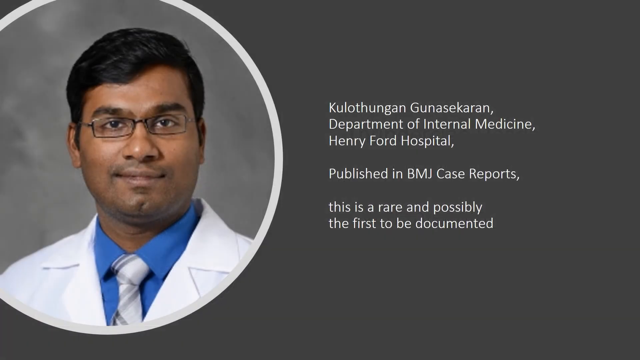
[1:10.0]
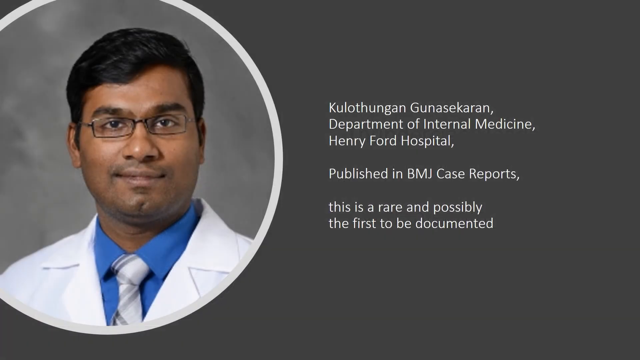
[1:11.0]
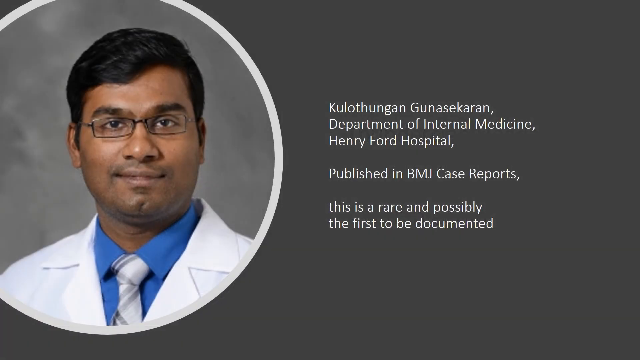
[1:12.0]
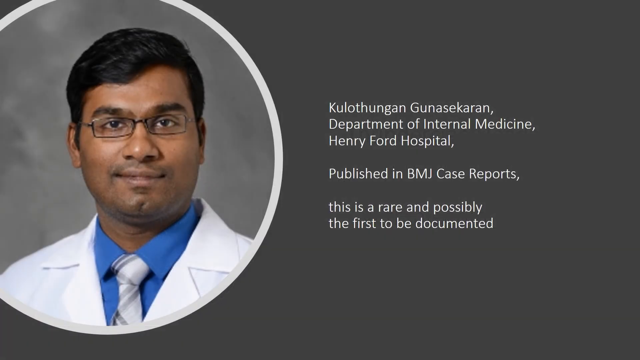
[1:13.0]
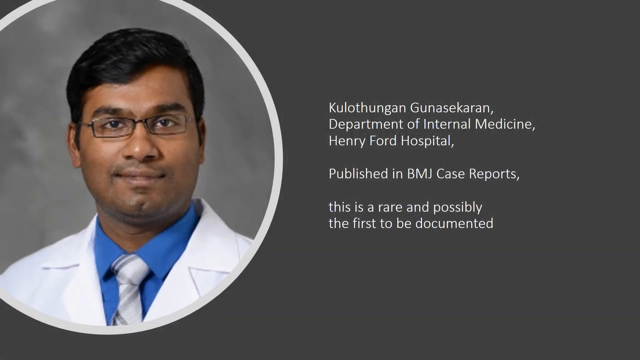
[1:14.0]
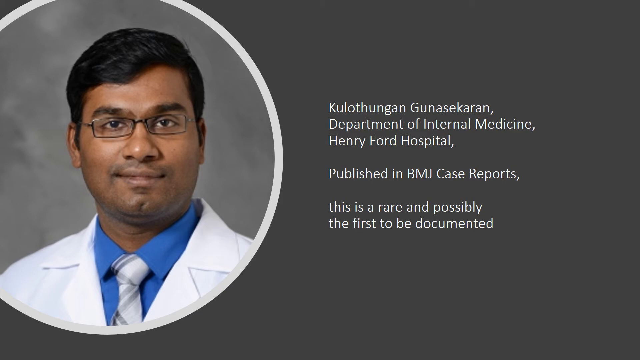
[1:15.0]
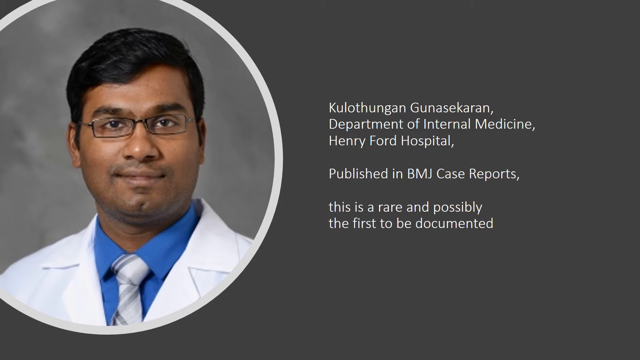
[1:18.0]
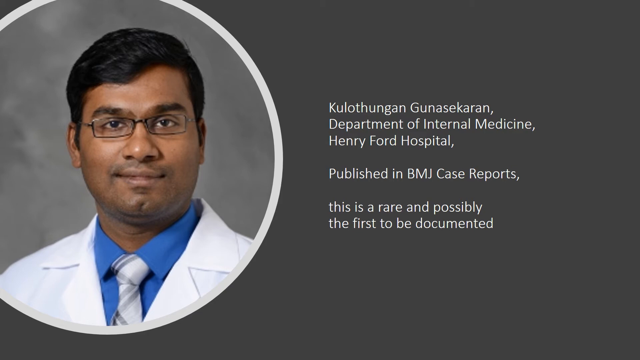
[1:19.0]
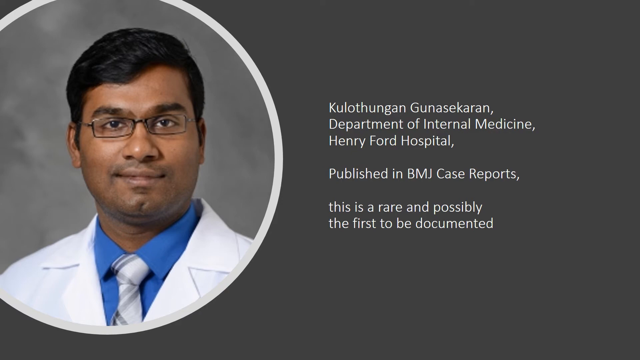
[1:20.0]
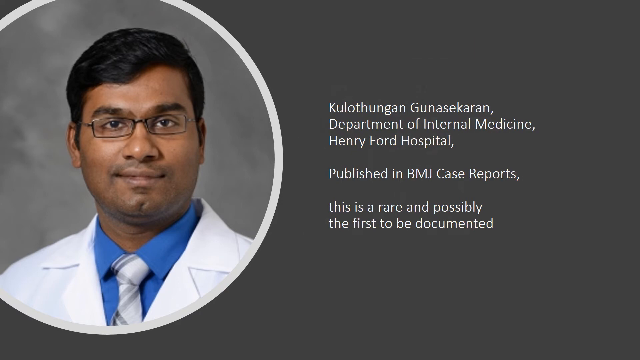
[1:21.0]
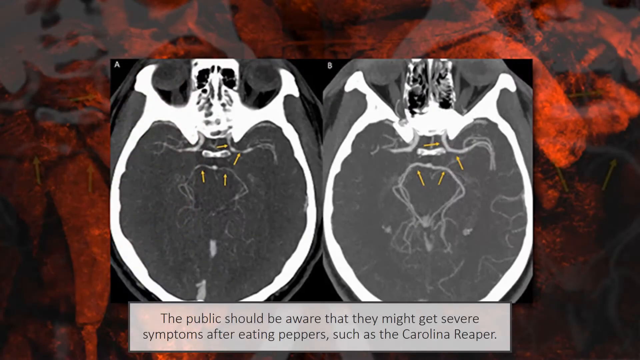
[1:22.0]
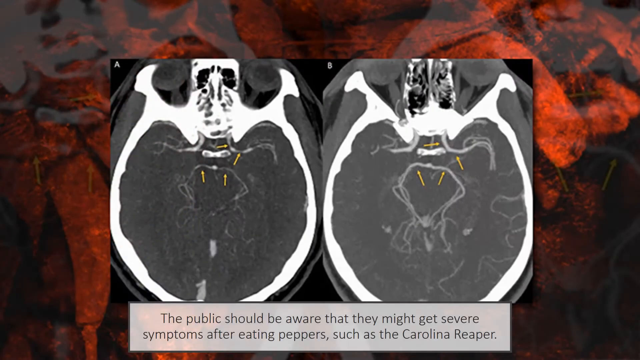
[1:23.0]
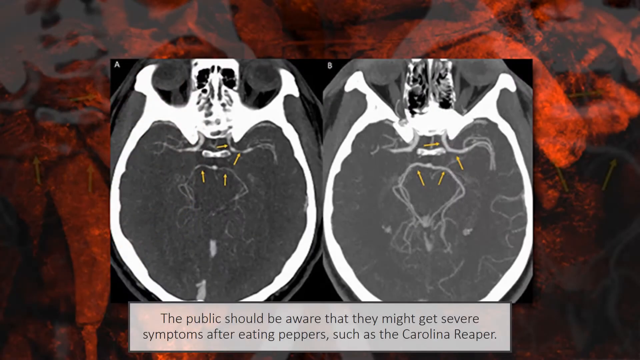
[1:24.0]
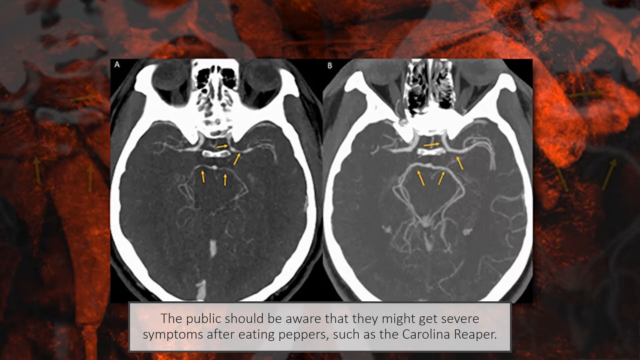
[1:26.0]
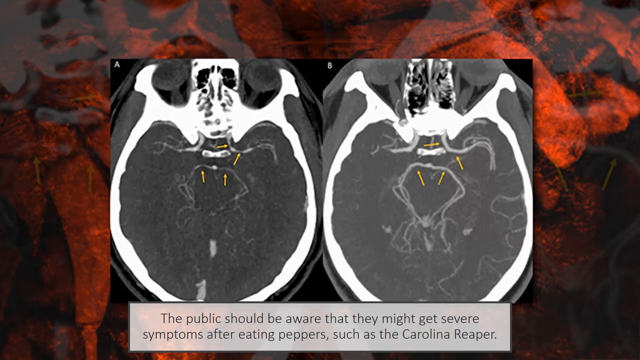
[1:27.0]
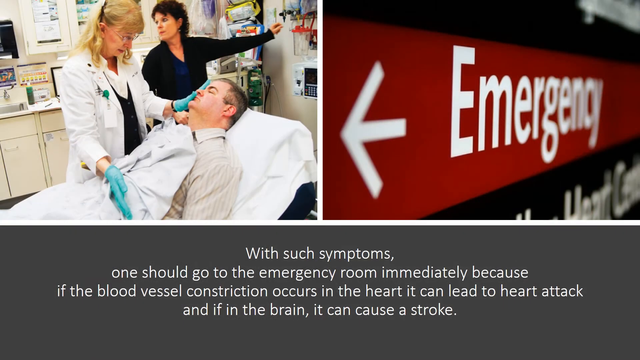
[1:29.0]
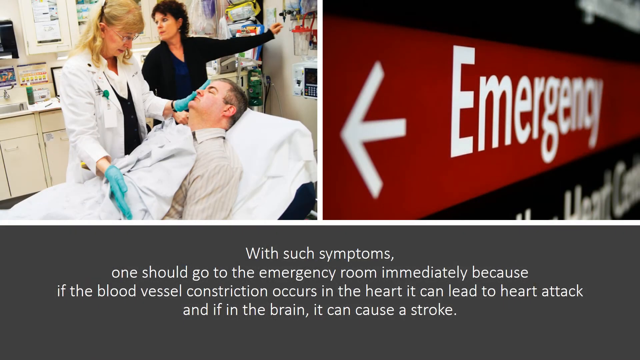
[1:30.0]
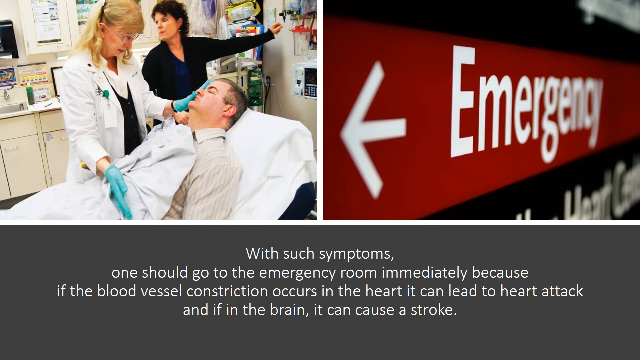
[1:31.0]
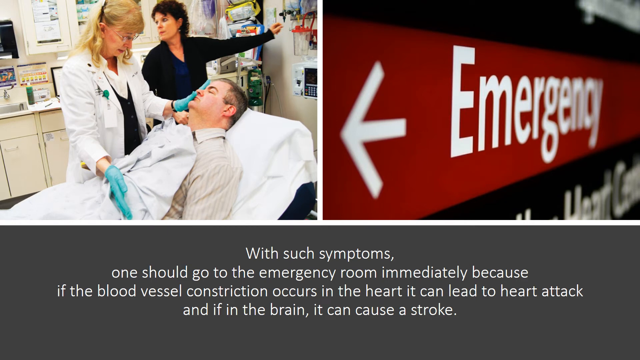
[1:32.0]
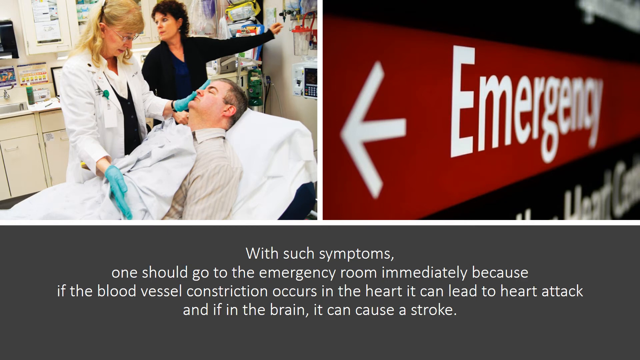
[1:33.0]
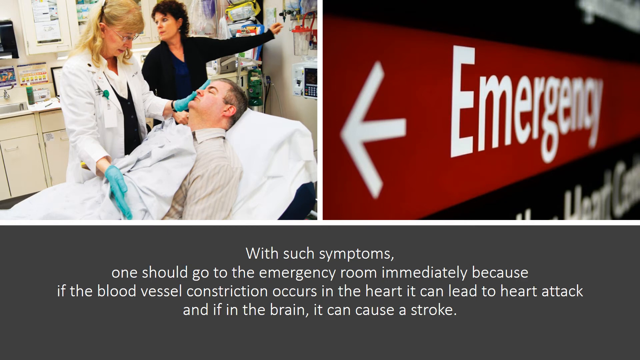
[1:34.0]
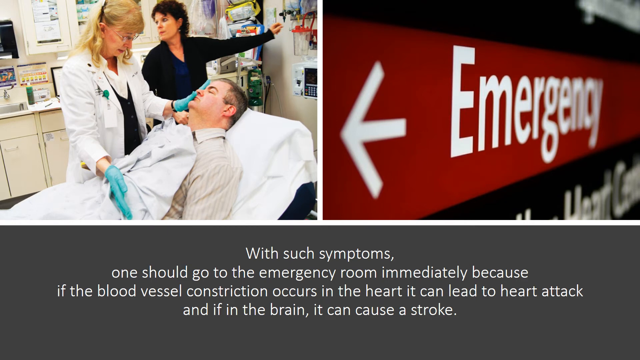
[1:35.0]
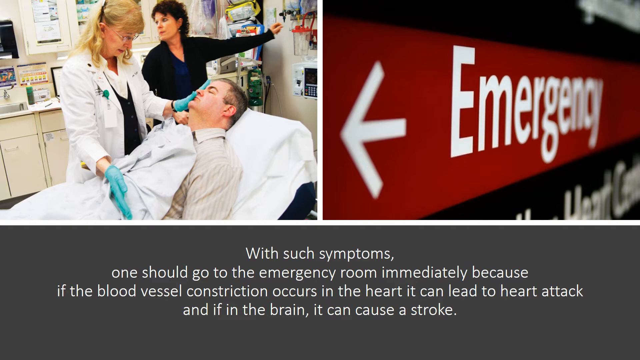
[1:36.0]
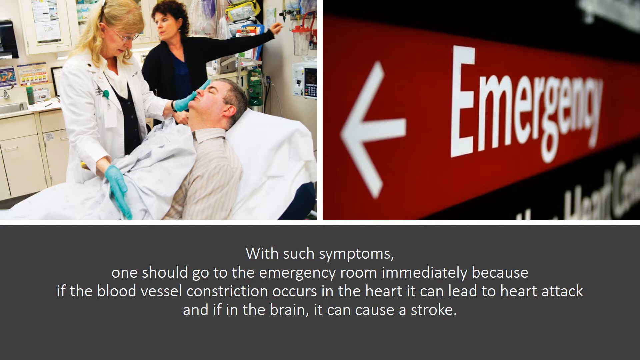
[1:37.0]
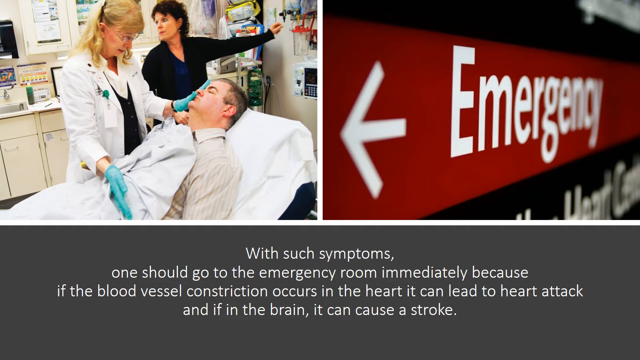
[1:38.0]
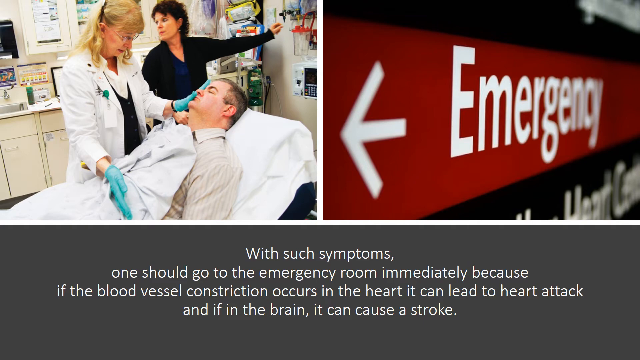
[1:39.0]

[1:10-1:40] On the left of the screen is a profile image of a man in a lab coat who appears to be of Indian descent; he wears glasses, a white lab coat, a blue shirt and a light-colored tie. His name is given as Kulothungan Gunasekaran of the Department of Internal Medicine at Henry Ford Hospital, published in the BMJ case reports. Text reads "this is a rare and possibly the first to be documented." The video switches back to the CT scan image, now with yellow arrows pointing to the vasoconstriction. Another slide shows a man lying on a stretcher in an exam room, with a woman in a white lab coat and turquoise gloves standing over him; another female medical staff member appears to be kind of behind the stretcher. To the right of that image is a zoomed-in sign pointing to the emergency room. At the bottom, white text on a gray background reads: "with such symptoms one should go to the emergency room immediately because if the blood vessel constriction occurs in the heart it can lead to a heart attack and if in the brain it can cause a stroke."